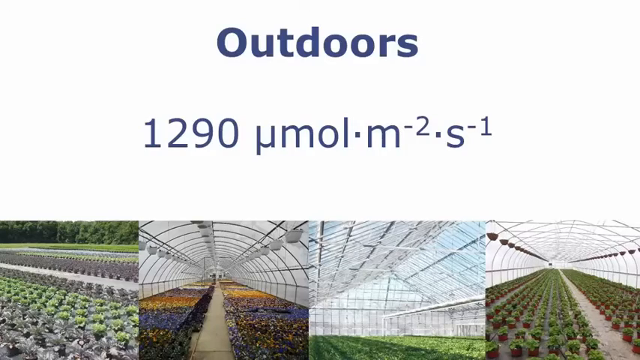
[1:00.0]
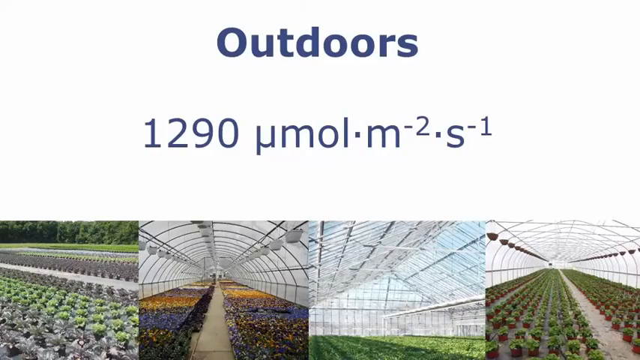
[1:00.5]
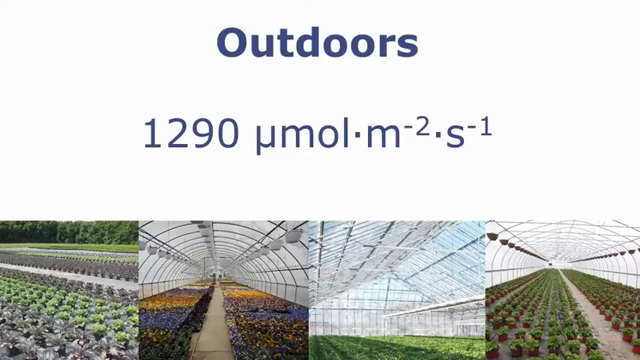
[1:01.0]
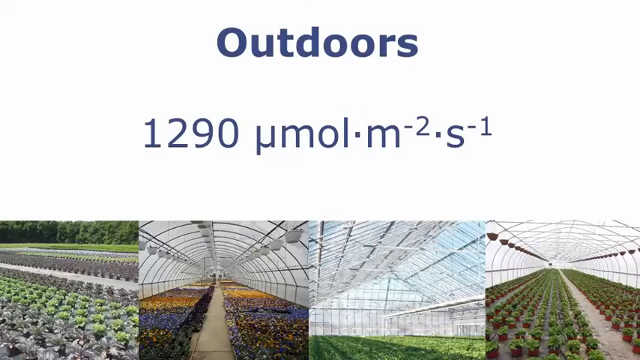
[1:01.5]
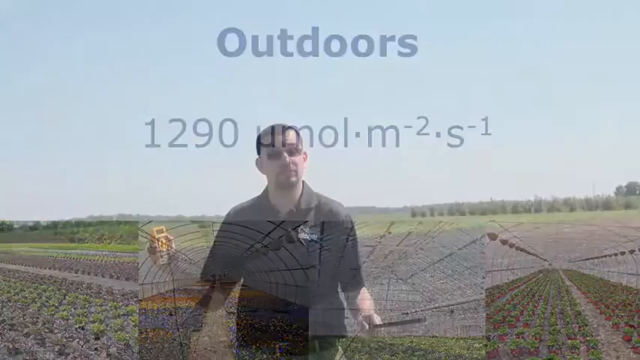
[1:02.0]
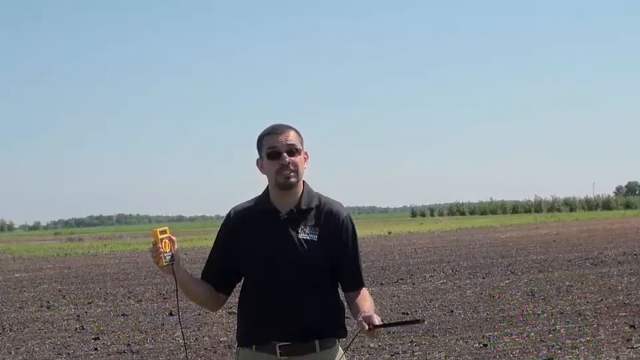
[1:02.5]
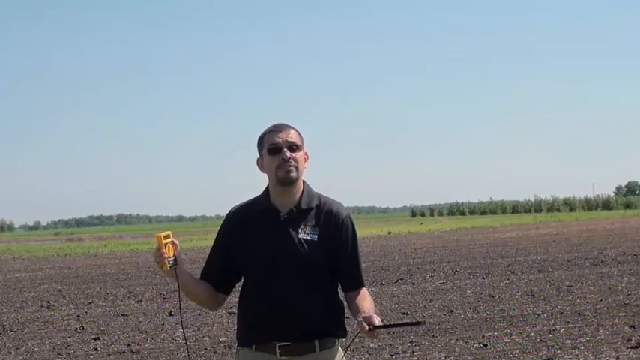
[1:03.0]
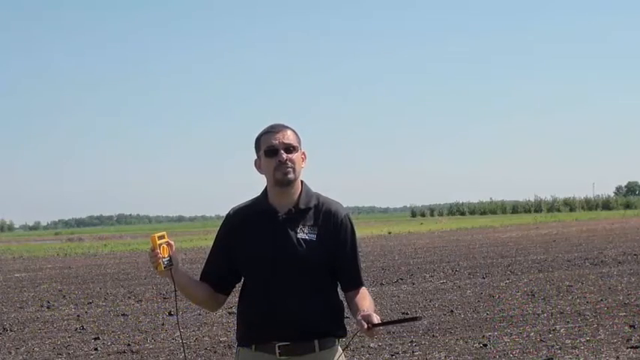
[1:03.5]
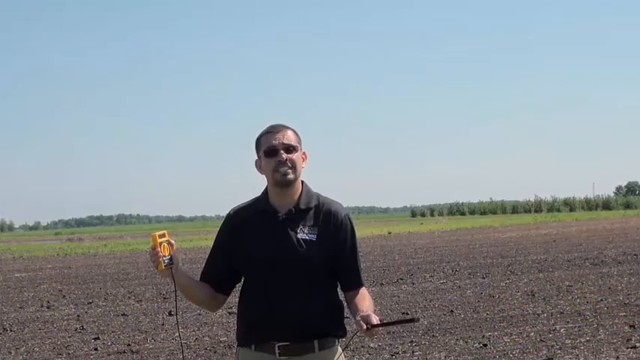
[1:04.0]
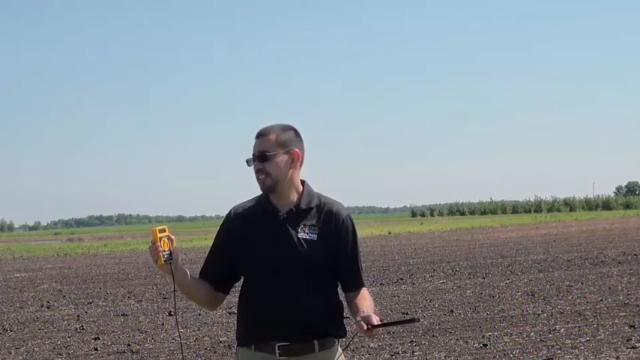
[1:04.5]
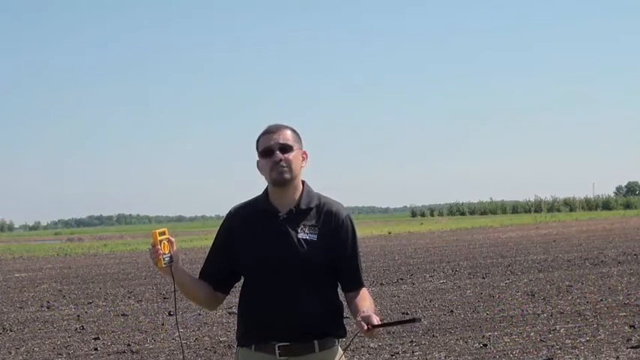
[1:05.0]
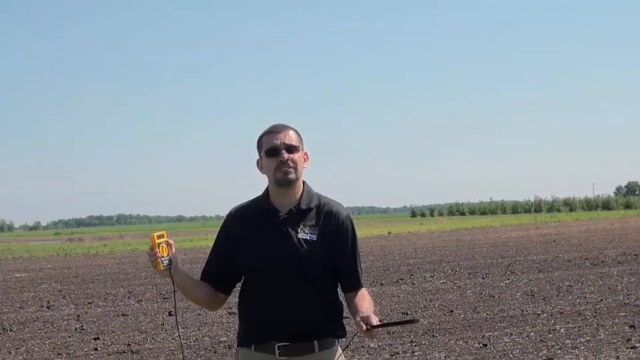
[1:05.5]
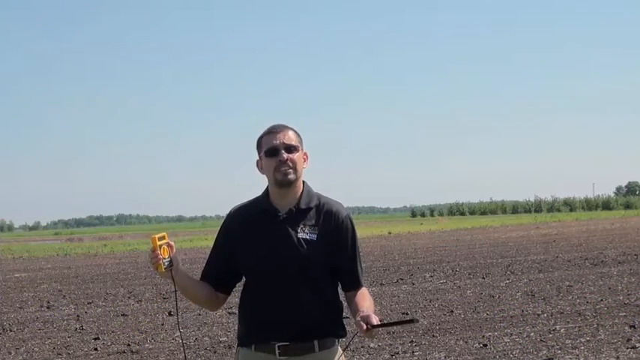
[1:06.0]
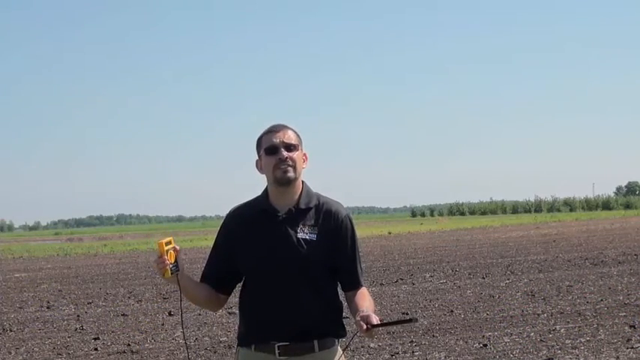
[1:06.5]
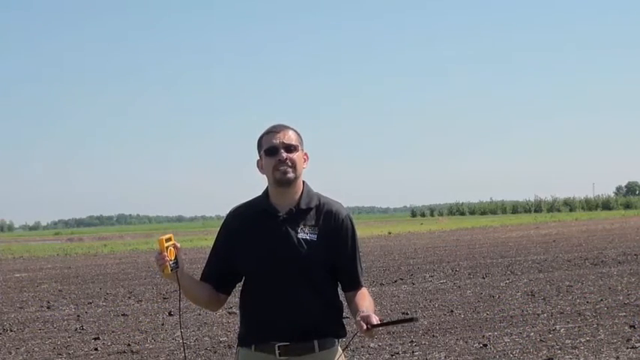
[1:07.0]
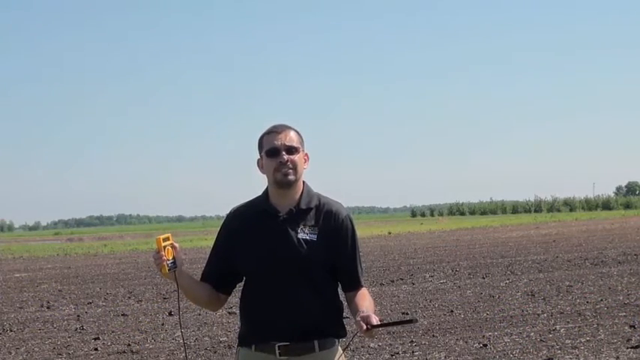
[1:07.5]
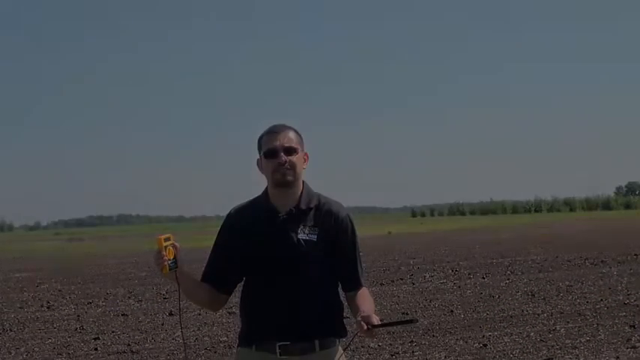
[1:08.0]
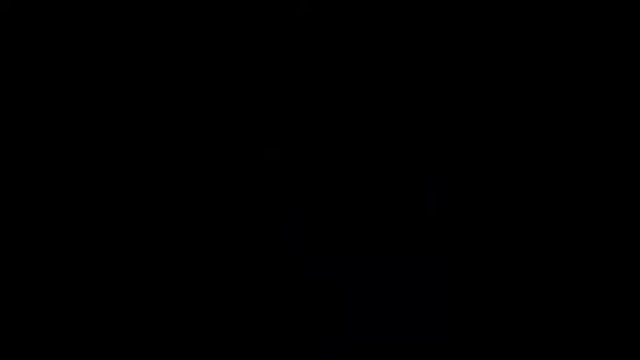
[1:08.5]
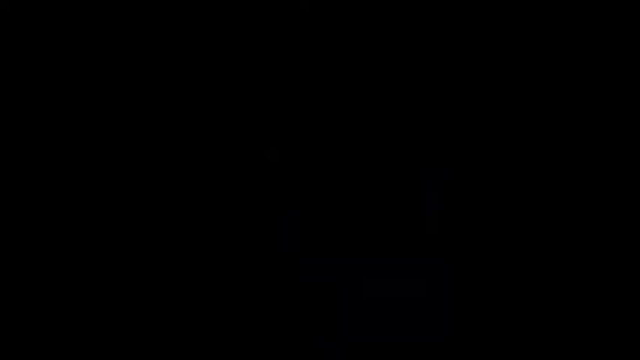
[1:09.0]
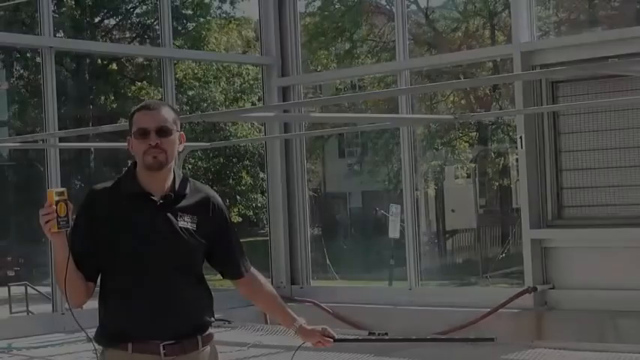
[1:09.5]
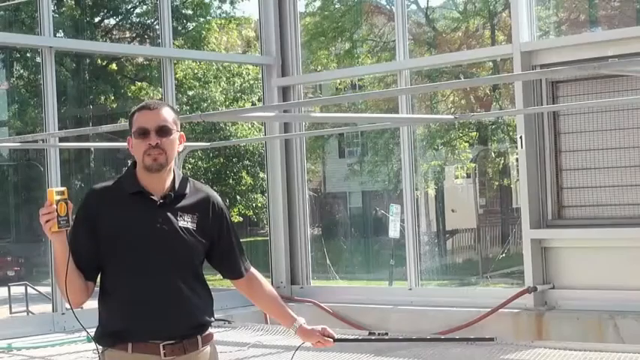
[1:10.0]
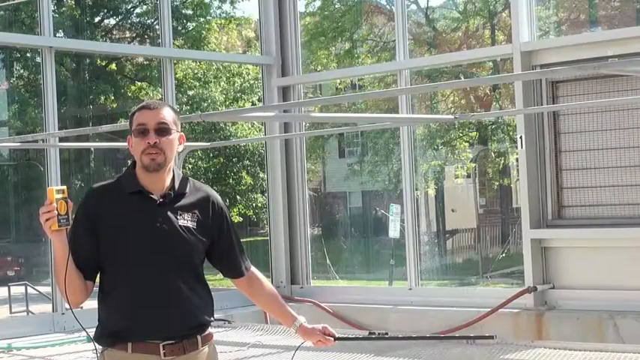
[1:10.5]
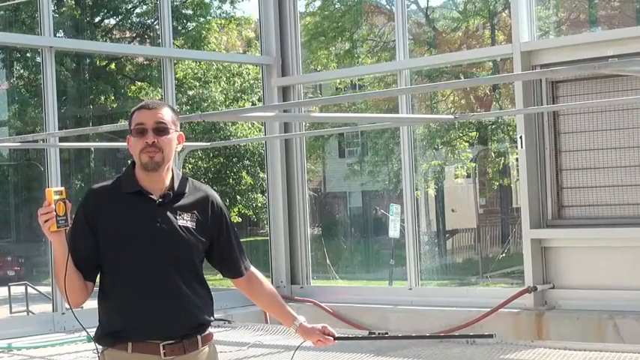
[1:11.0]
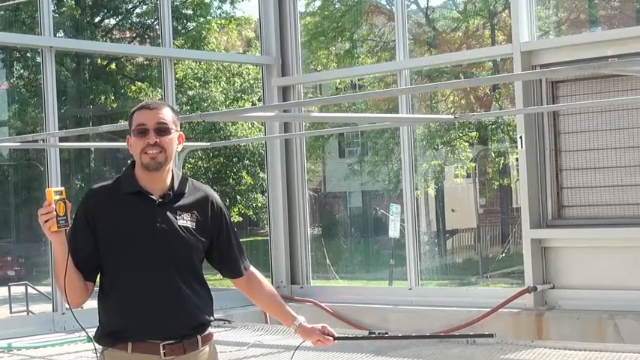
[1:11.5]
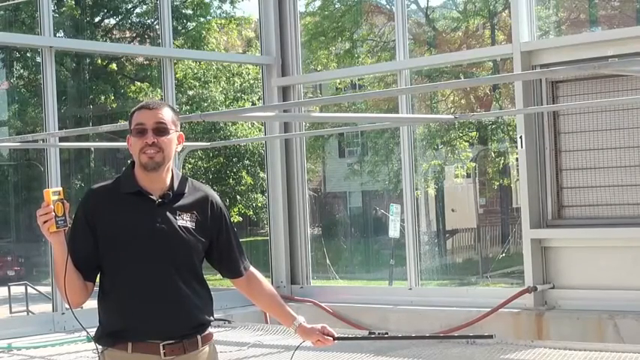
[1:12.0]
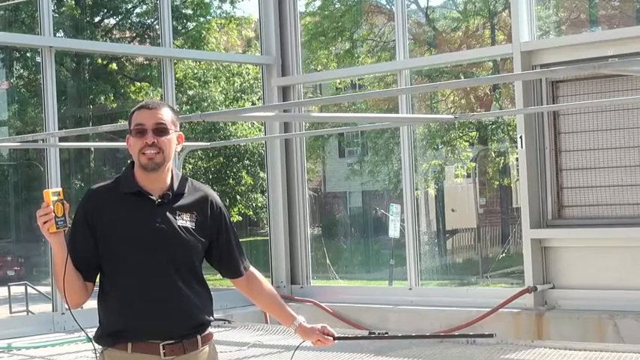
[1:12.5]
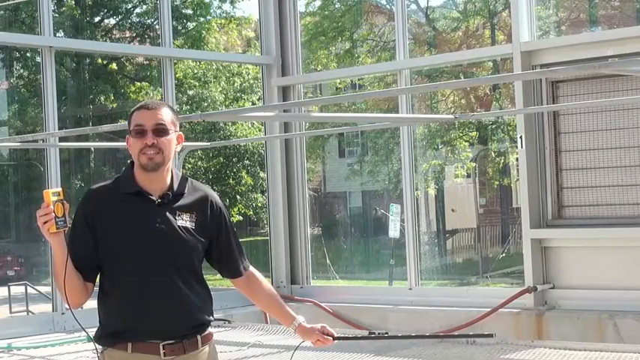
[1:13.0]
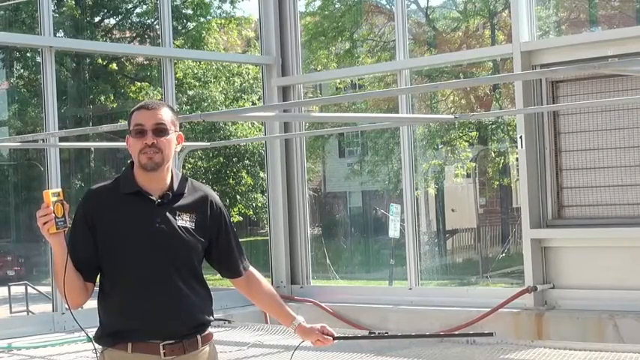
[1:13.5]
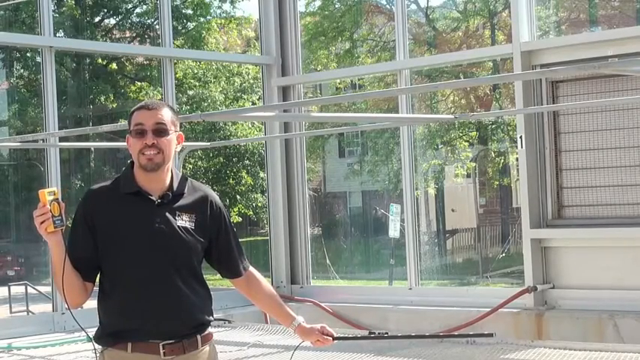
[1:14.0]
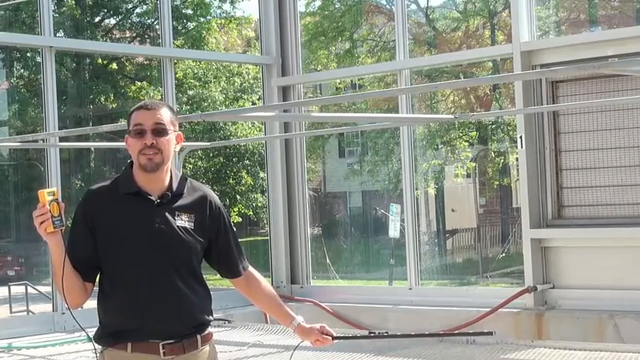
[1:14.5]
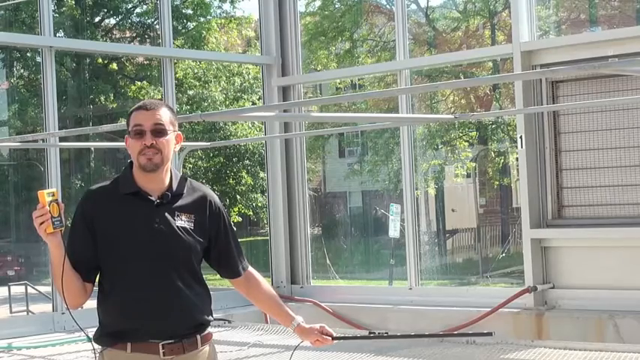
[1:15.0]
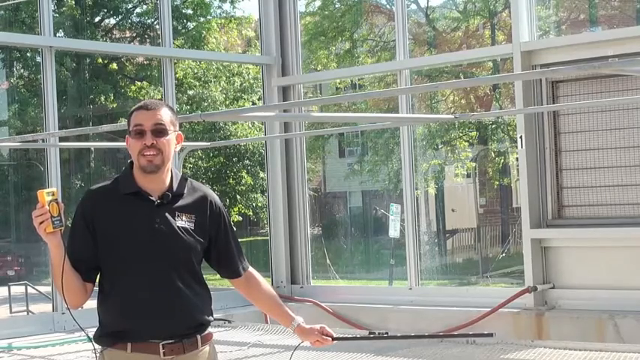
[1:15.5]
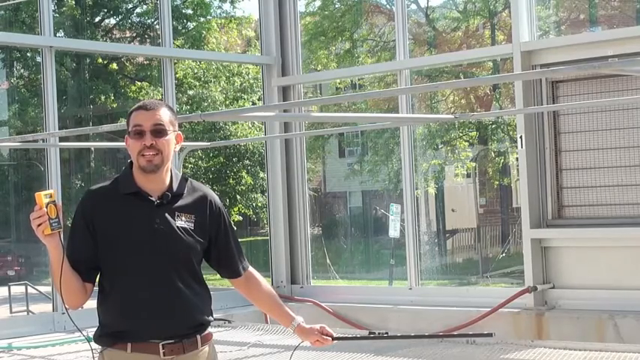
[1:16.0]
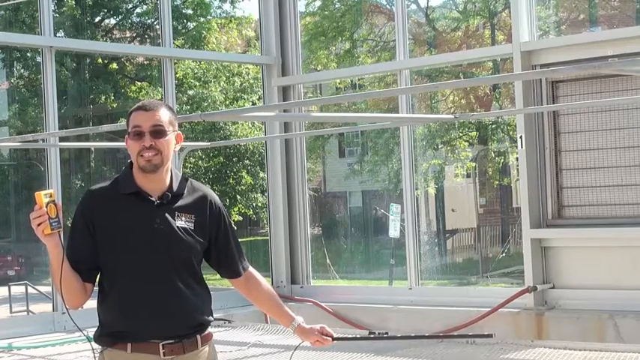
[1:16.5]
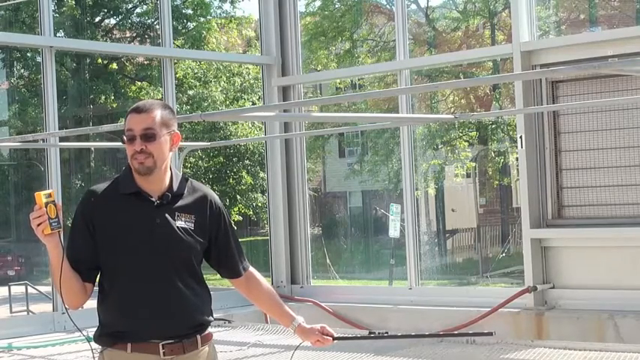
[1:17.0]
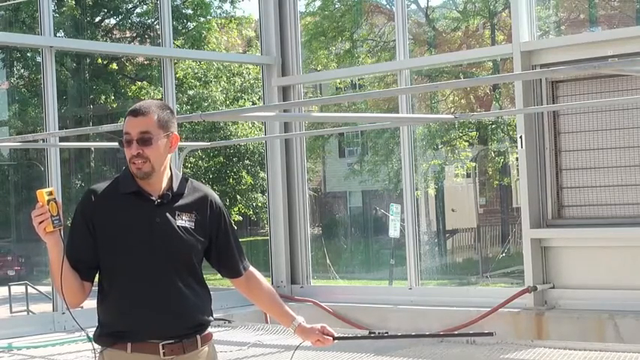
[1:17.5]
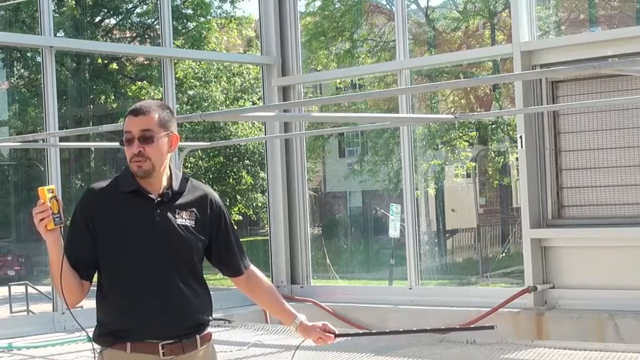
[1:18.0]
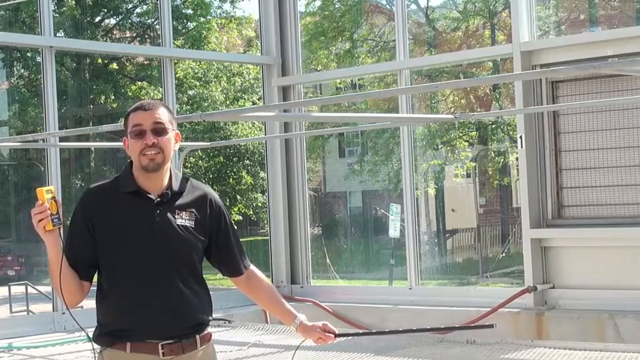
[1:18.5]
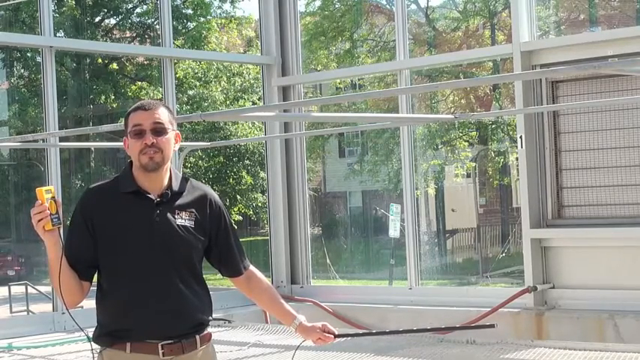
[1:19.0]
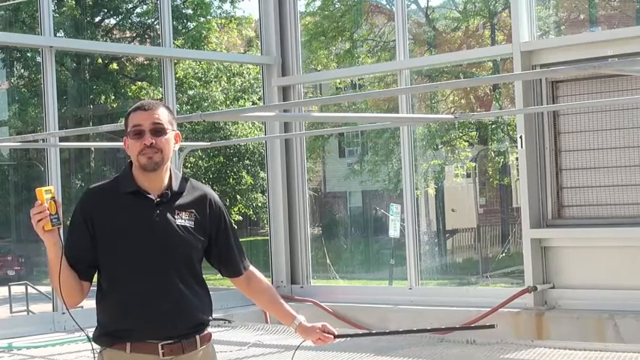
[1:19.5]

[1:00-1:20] A slide has a white section up top with blue lettering reading "Outdoors," with "1290" underneath and an unreadable equation. At the bottom are four photographs: green and gray plants in an open field with green grass and trees in the background; orange, purple, red and yellow rows of plants with a gray path in the middle under a rounded roof, with white plants hanging in three rows at the top; a green patch at the bottom under a triangular white roof; and, at the far right, green plants with a gray path slightly to the right under a rounded white roof. The video returns to the white man with short brown hair, brown sunglasses and a brown goatee, wearing a black collared short-sleeved shirt with a white patch on the left chest. In his right hand he holds a yellow electrical meter with a black cord, and in his left hand a black cord. Behind him are blue sky, green trees and green grass, and he stands on a grey dirt patch.